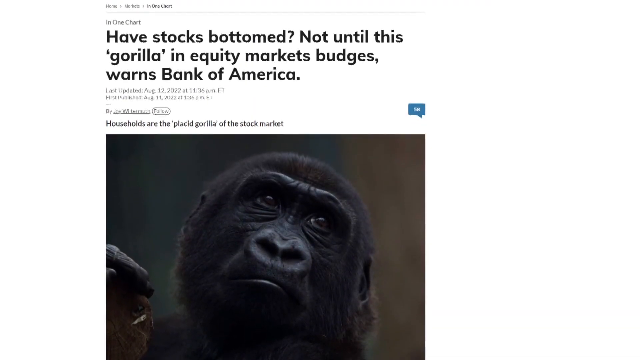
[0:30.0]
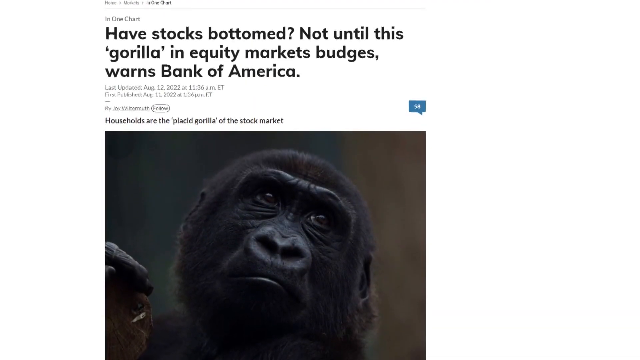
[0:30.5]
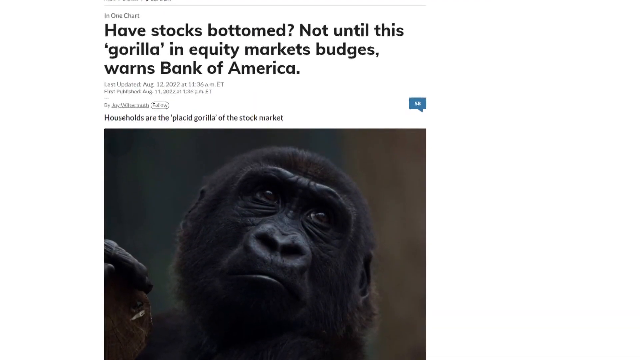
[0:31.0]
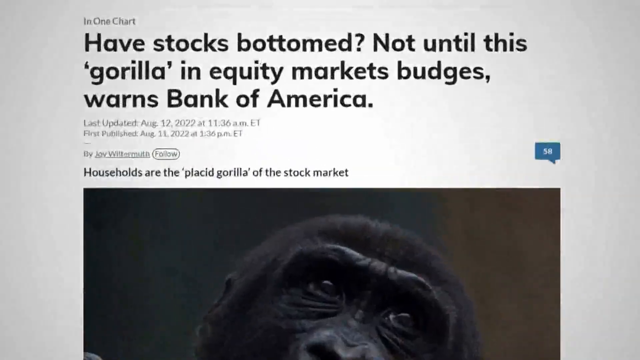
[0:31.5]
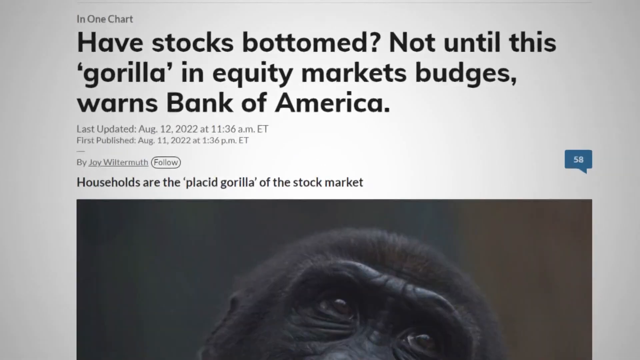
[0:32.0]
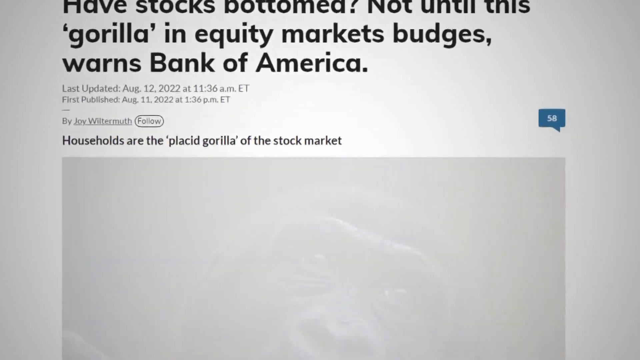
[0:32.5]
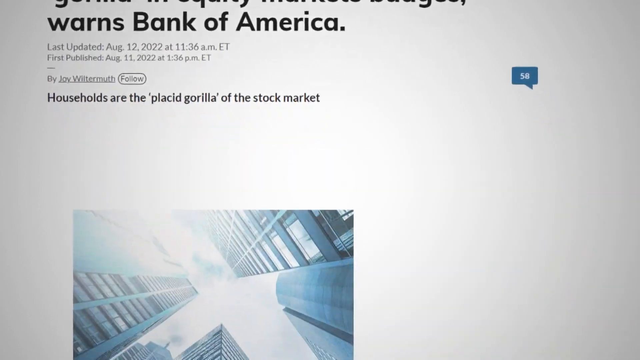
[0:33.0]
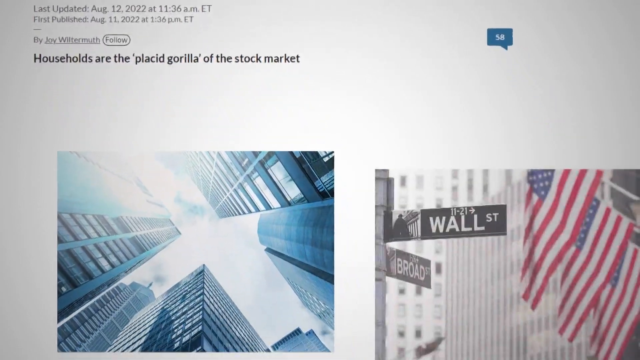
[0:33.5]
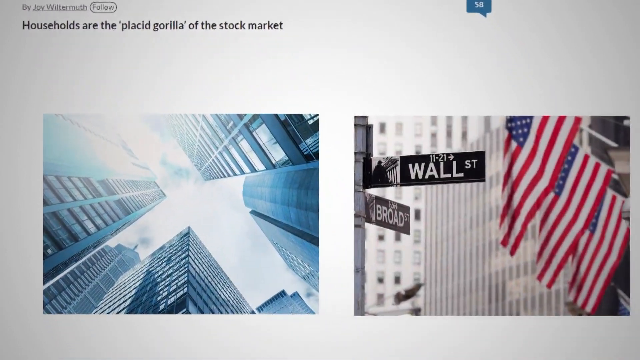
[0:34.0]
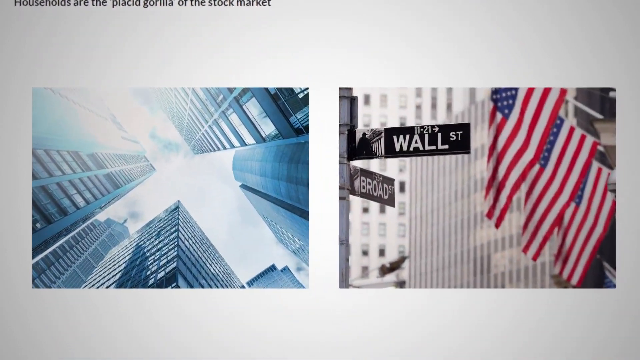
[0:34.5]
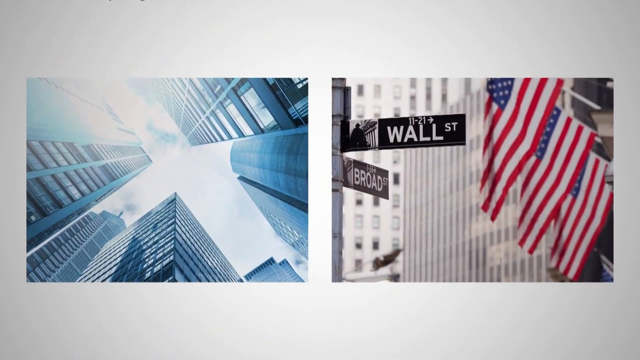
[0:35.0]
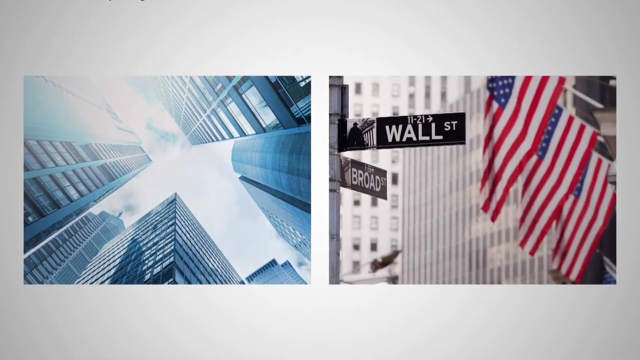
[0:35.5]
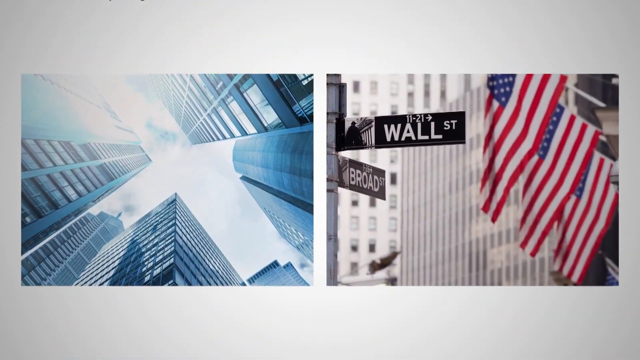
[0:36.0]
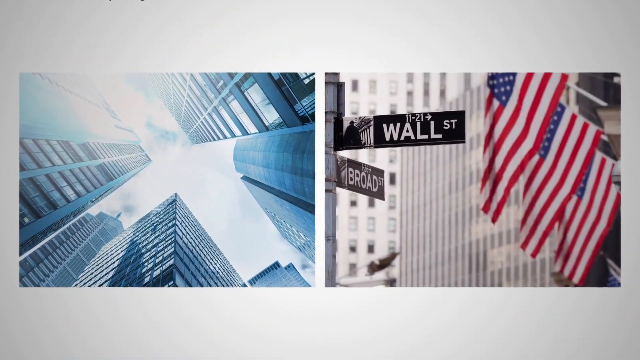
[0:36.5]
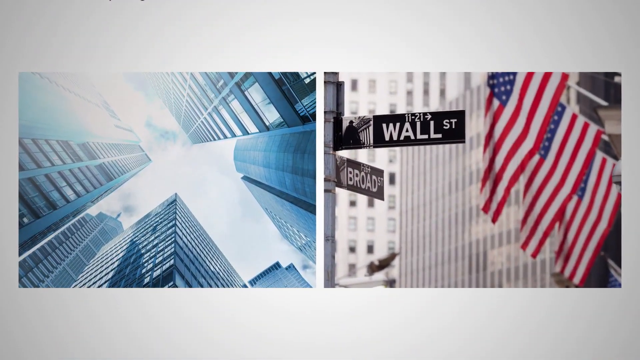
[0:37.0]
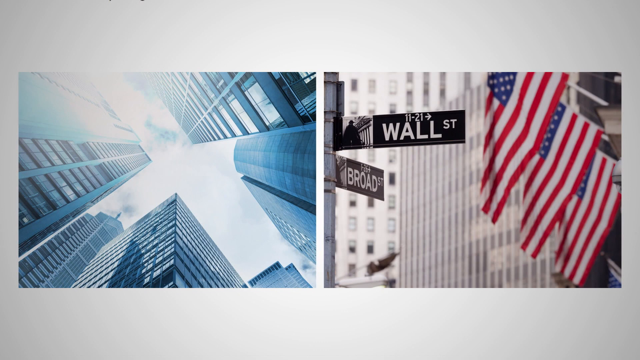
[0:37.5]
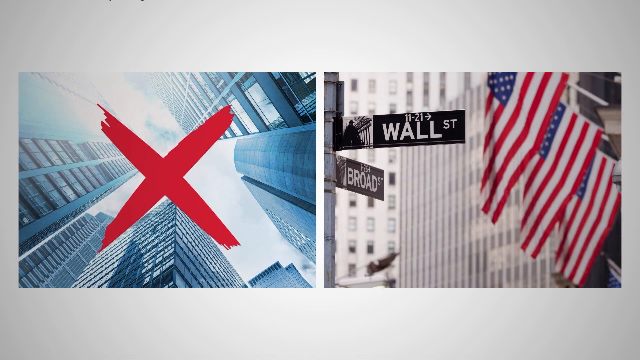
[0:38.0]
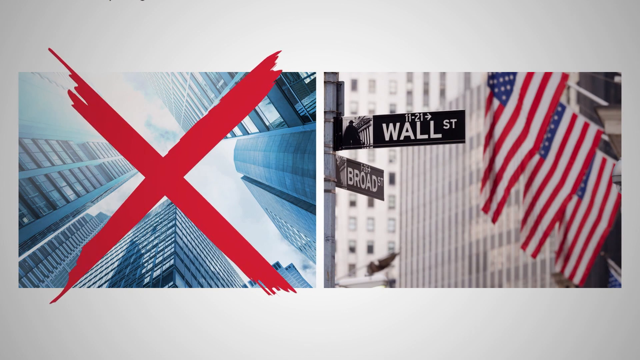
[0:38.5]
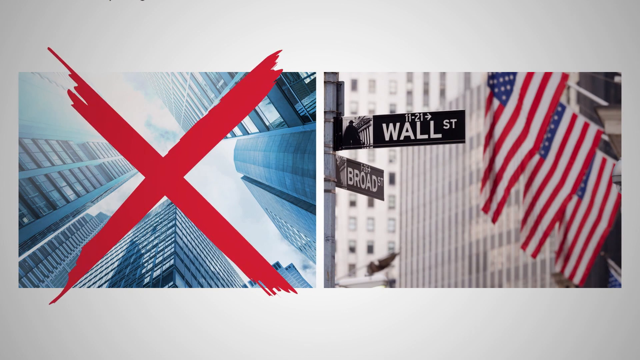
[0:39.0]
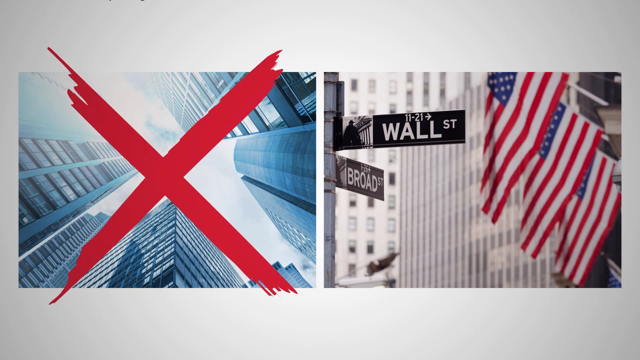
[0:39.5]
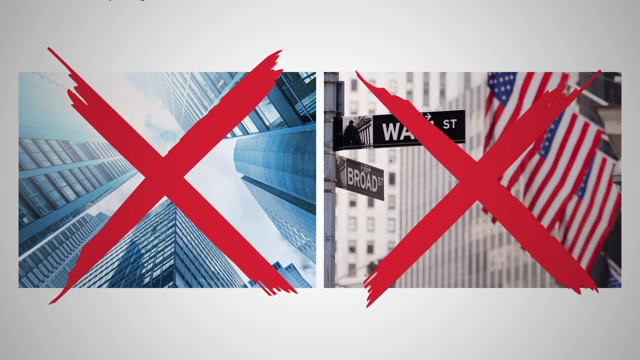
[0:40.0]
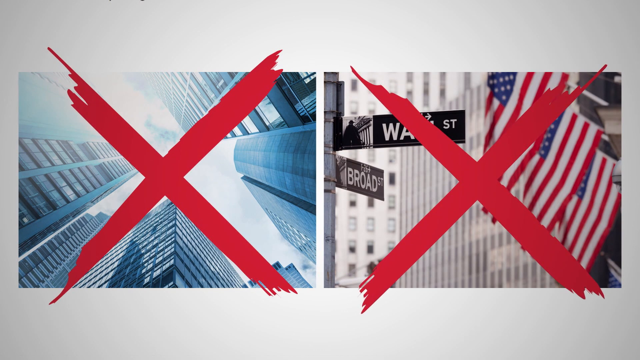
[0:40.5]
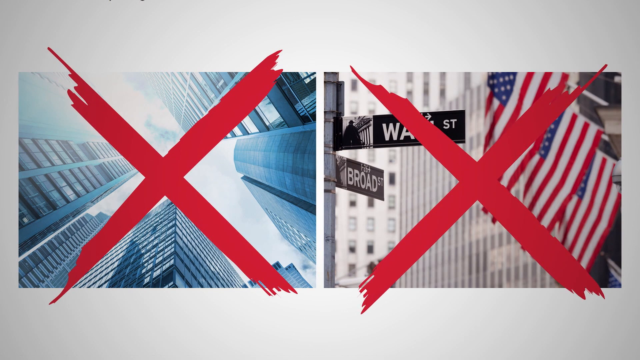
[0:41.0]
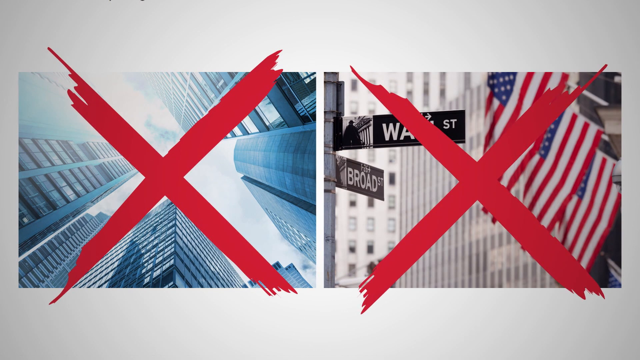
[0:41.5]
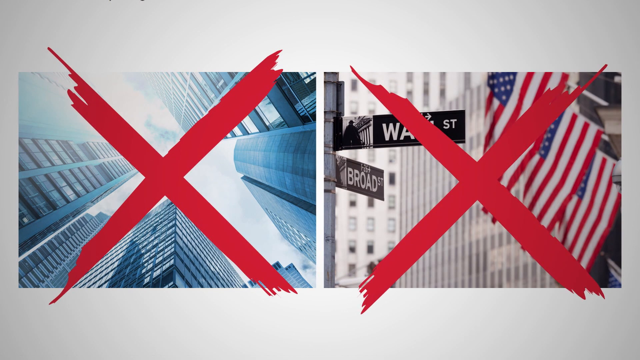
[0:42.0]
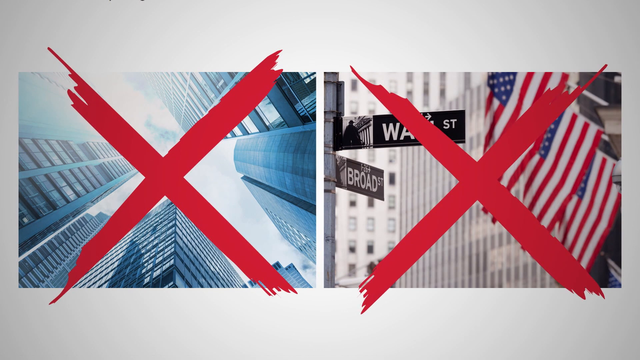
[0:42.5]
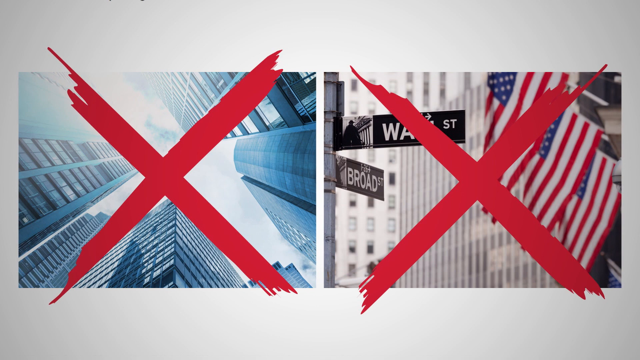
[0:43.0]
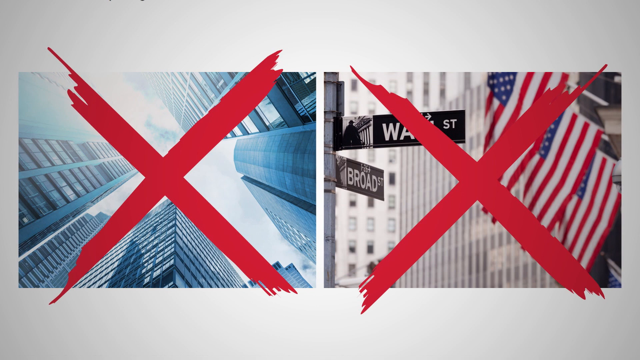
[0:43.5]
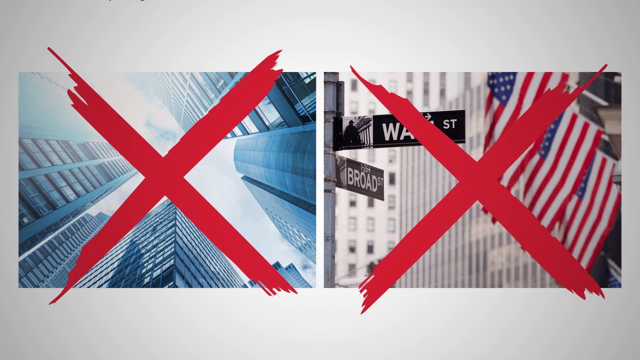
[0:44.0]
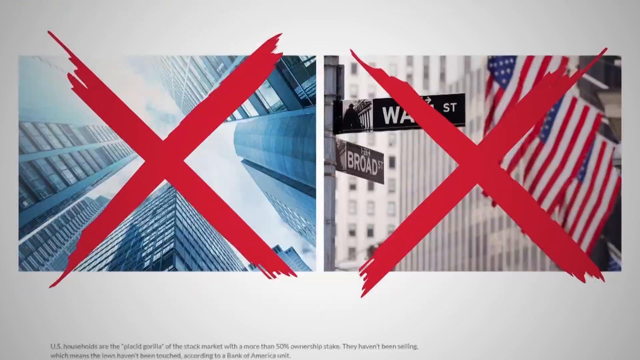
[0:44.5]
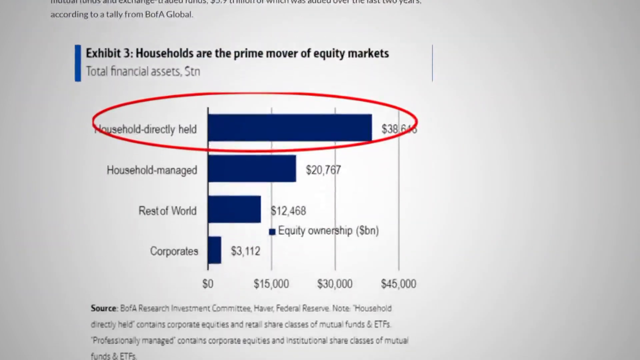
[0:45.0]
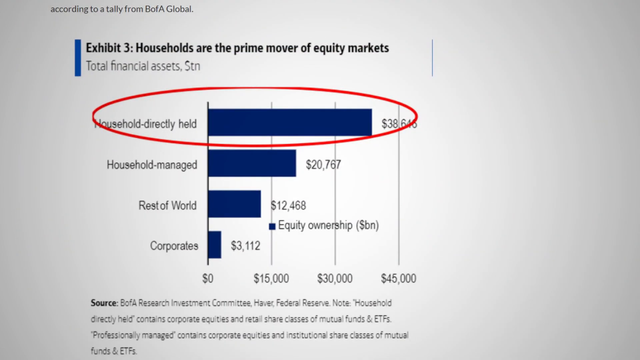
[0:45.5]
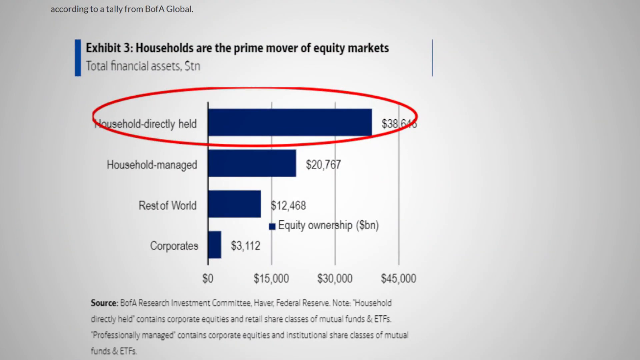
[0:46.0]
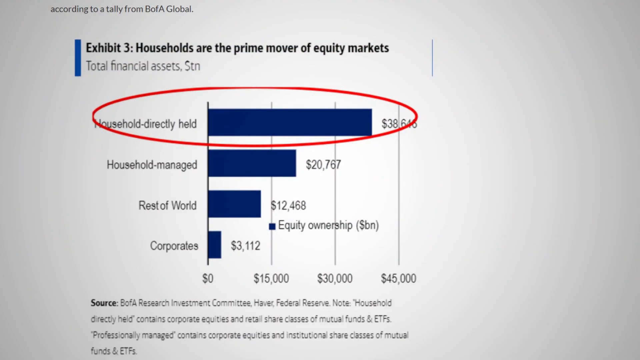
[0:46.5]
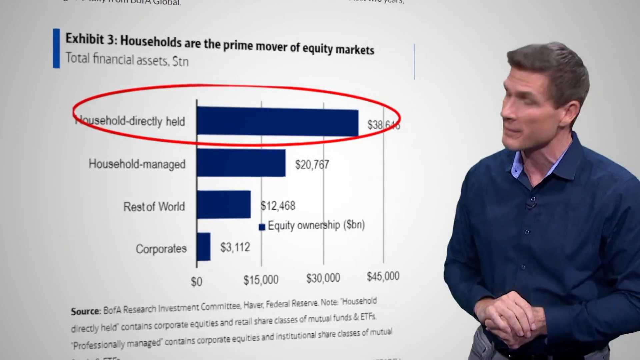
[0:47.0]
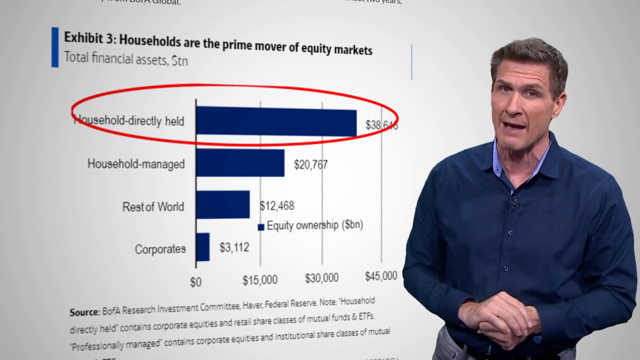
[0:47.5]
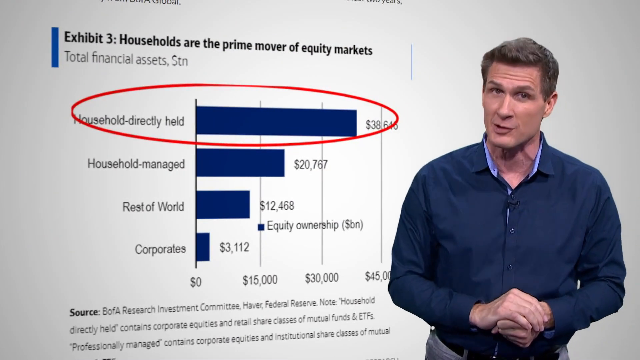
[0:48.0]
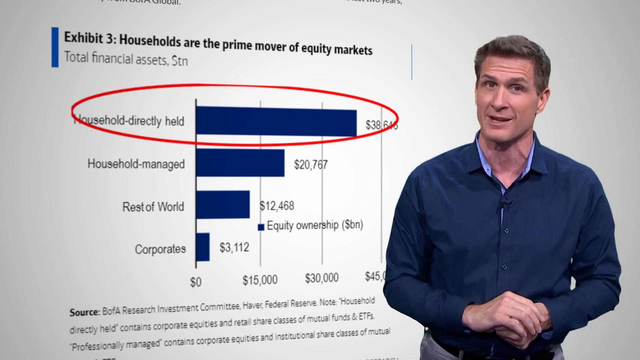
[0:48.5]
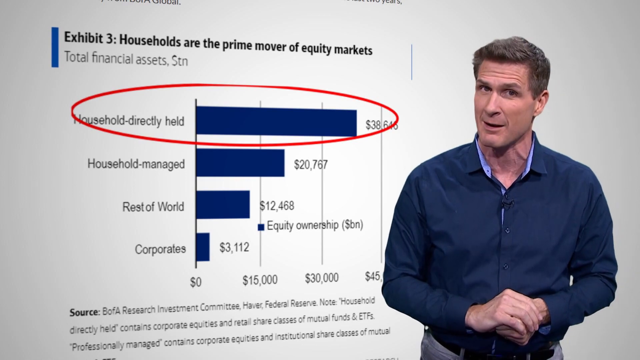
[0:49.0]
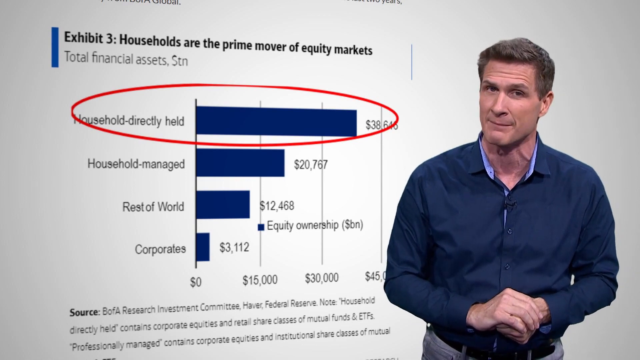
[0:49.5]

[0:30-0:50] The gorilla graphic is still on screen, with text reading "have stocks bottomed in this gorilla market". It then scrolls to two separate images: on the left, an upward view toward the sky showing tall skyscrapers, and on the right, a picture of New York City showing the intersection of Wall Street and Broadway, with American flags behind the two street signs. Large red X's cover both images. Another chart follows, reading "exhibit three households are the prime movers of equity markets total financial assets". It shows three different areas represented by thick blue lines, apparently indicating amounts; from the top, largest to smallest, they are household directly held, household managed, rest of world, and corporates.